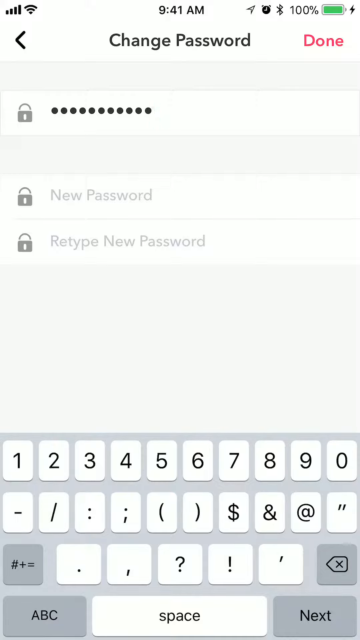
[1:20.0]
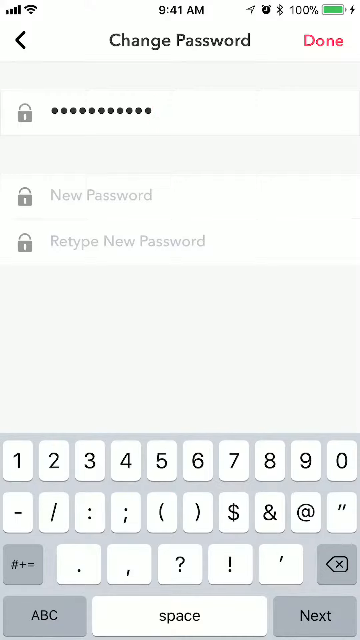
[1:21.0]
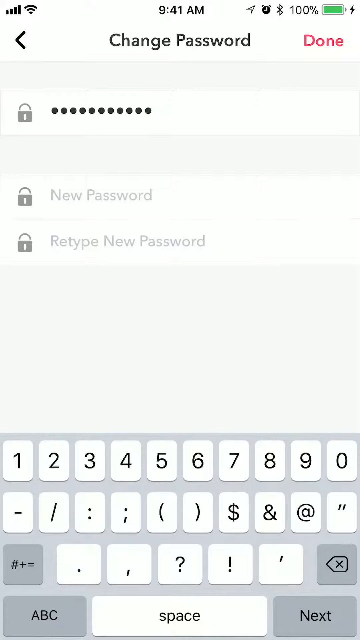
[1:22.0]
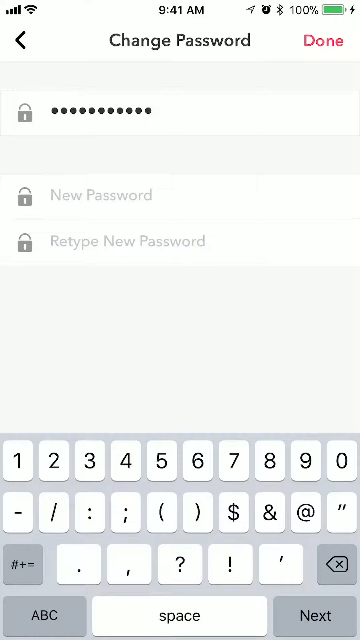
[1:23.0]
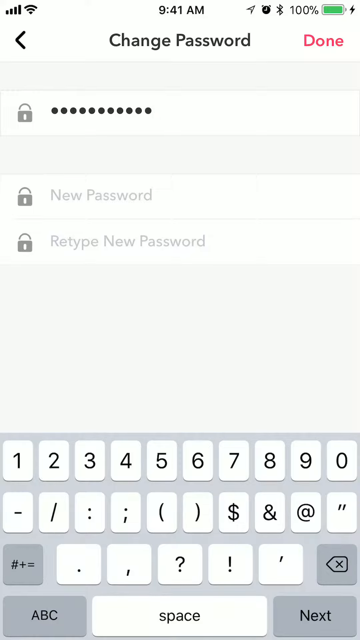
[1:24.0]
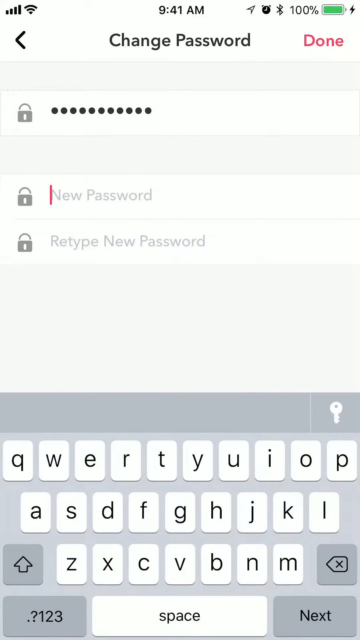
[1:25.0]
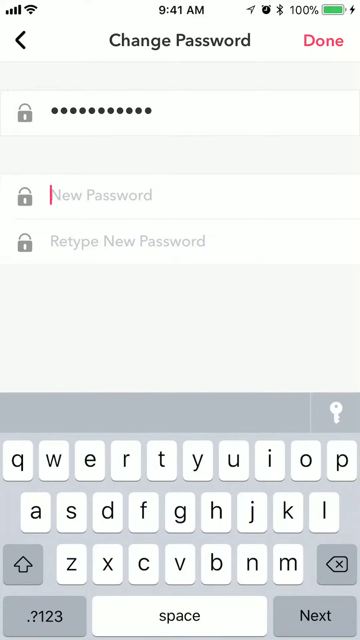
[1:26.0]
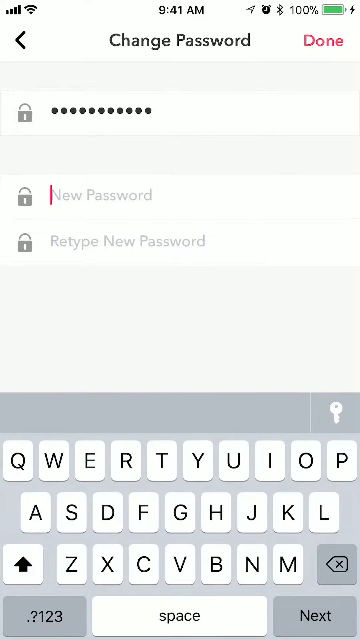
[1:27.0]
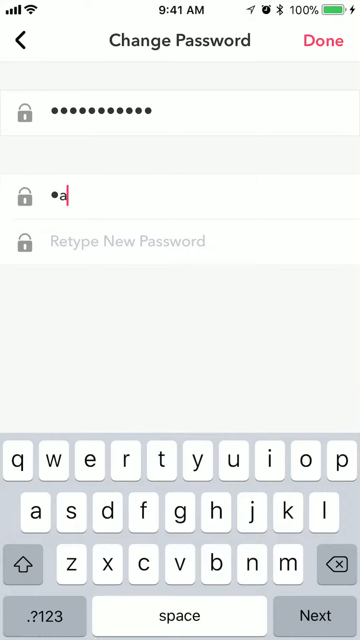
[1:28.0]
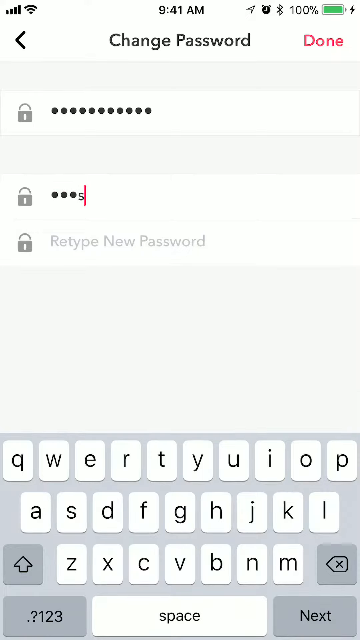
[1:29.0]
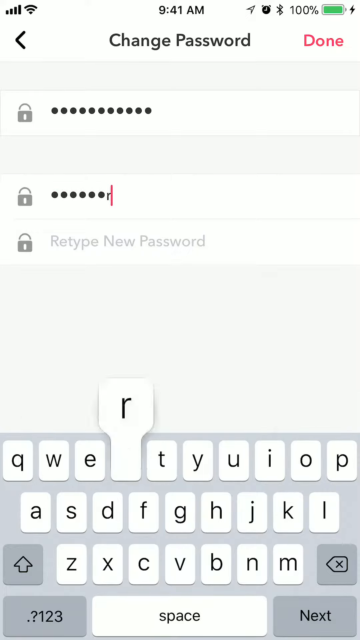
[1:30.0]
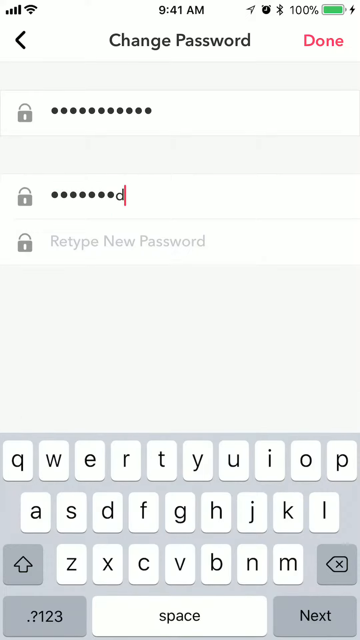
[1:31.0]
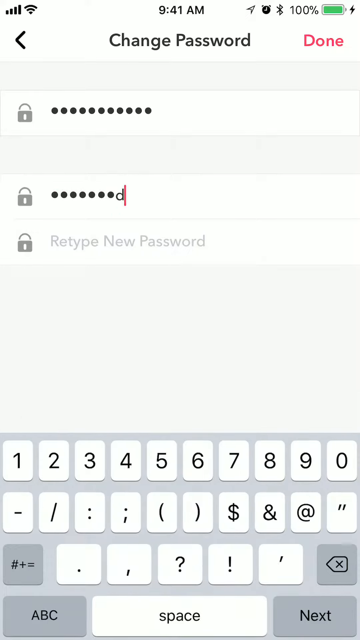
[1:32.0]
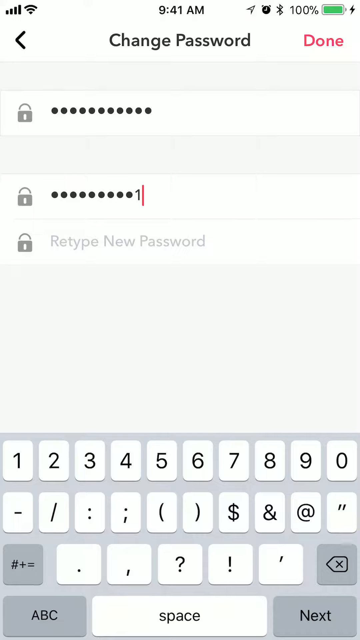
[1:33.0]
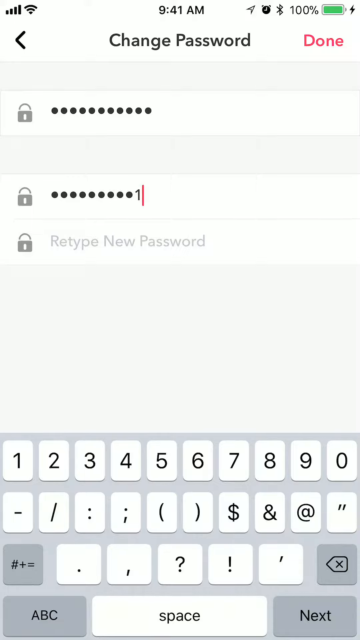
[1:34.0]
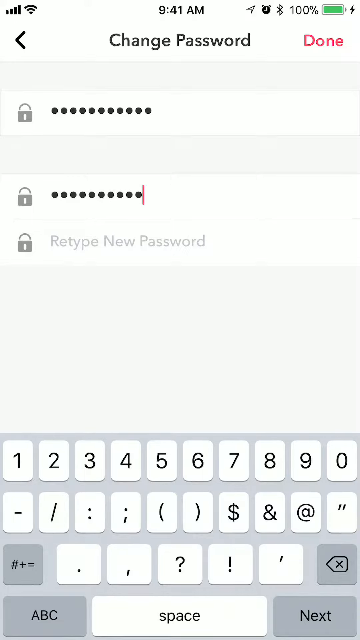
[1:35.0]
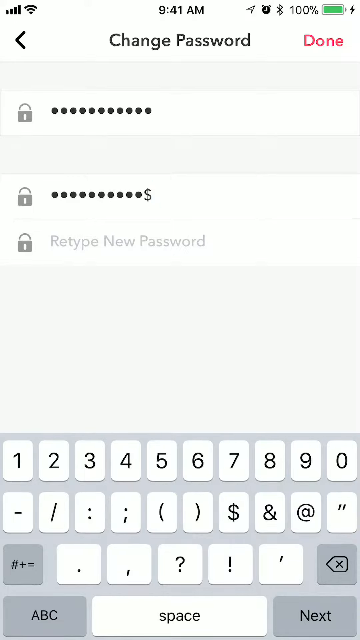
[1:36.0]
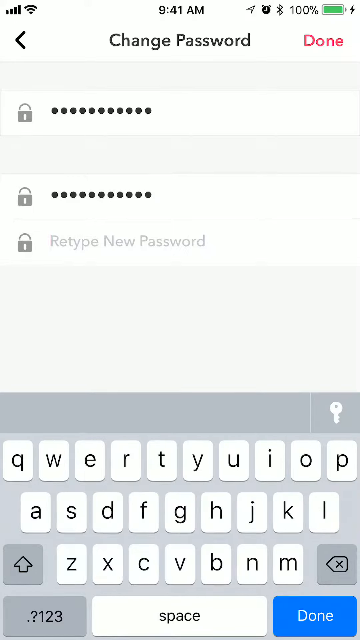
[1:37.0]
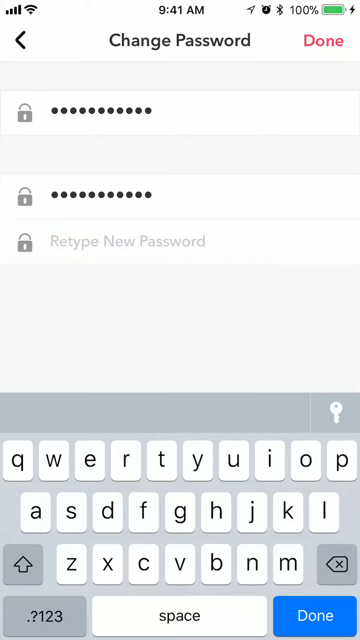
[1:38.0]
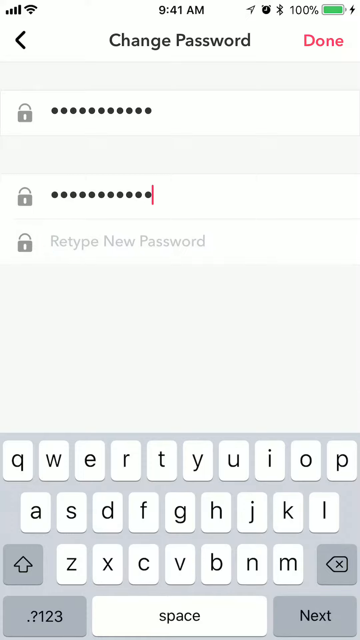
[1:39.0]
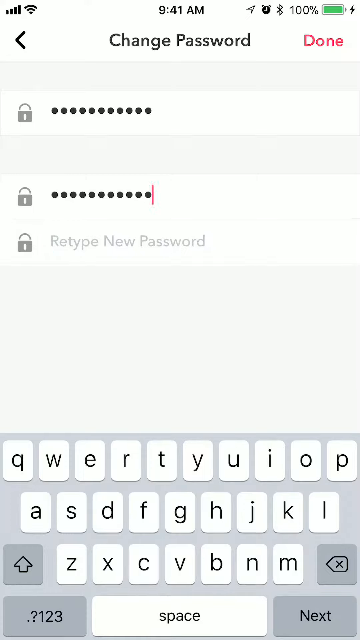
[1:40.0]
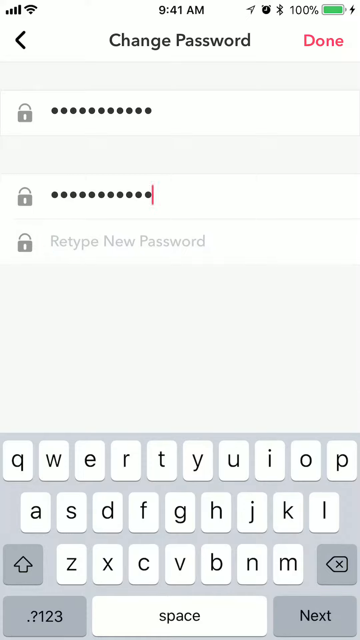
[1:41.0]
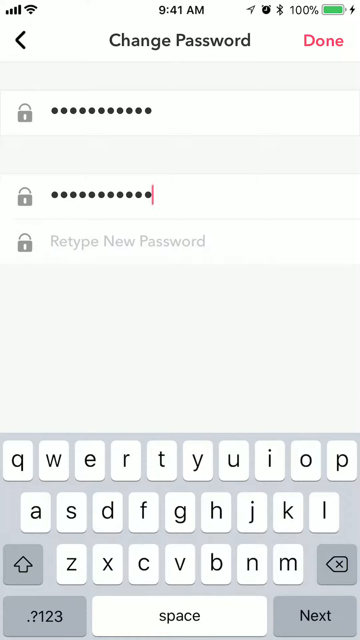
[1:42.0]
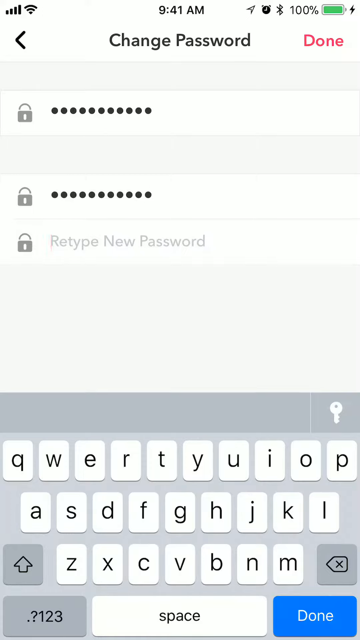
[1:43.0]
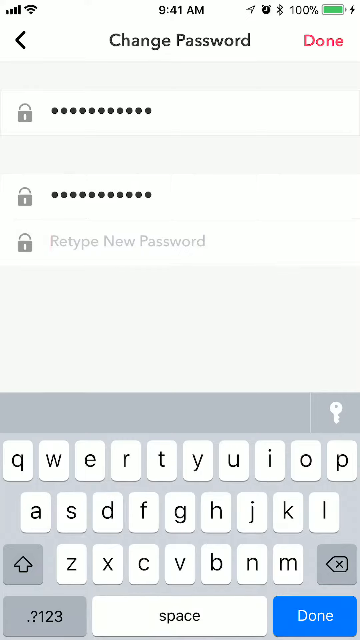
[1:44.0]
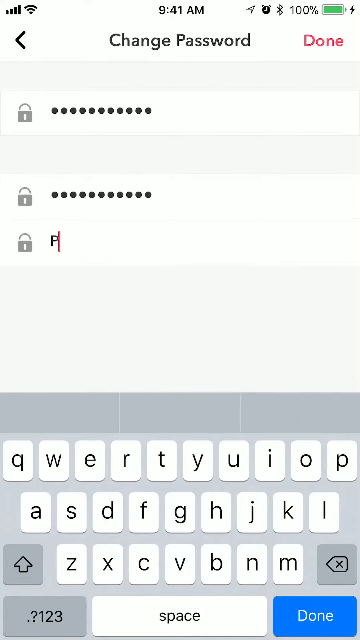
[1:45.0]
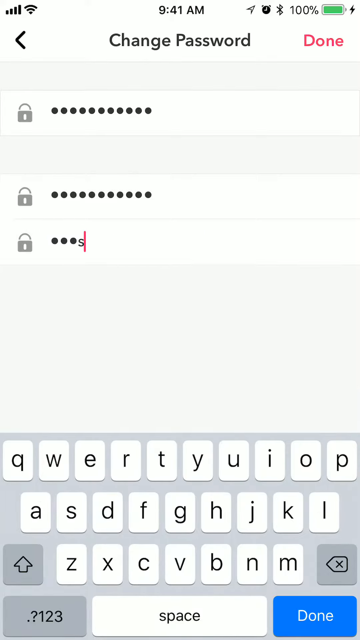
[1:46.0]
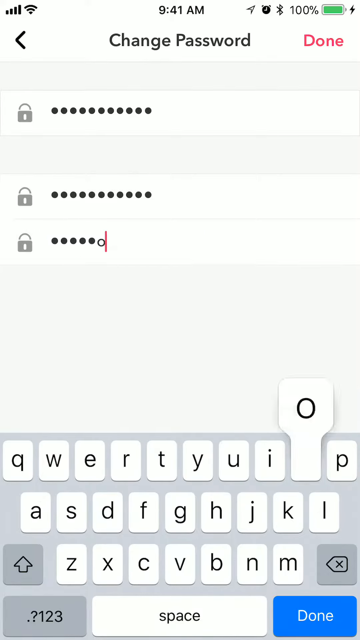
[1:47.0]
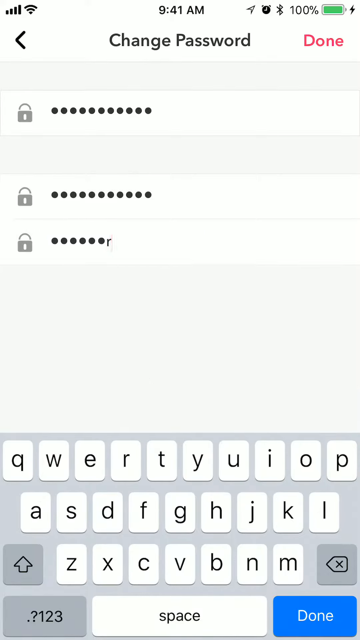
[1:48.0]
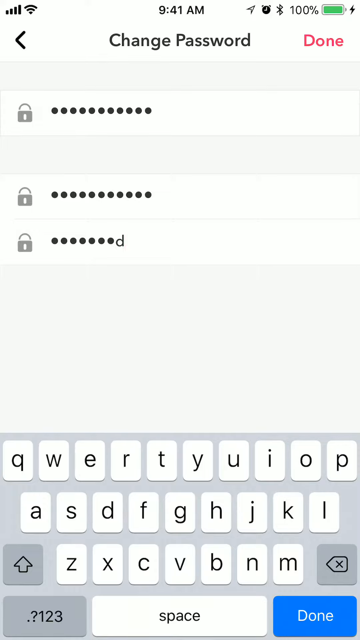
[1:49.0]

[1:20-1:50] The Musical.ly page says "change password" and shows the change password logo. The current password is filled in, while the new password and retype new password fields are empty at first. At the top right is an option to press done. The user fills in the new password, "password21$", and then types it again in the retype new password field. The status bar shows the battery at 100%, with Bluetooth, a stopwatch and a location icon, and the time in the middle reads 9:41 a.m. On the left side, the Wi-Fi signal and the cellular signal are both full. The iPhone keyboard is at the bottom of the screen.